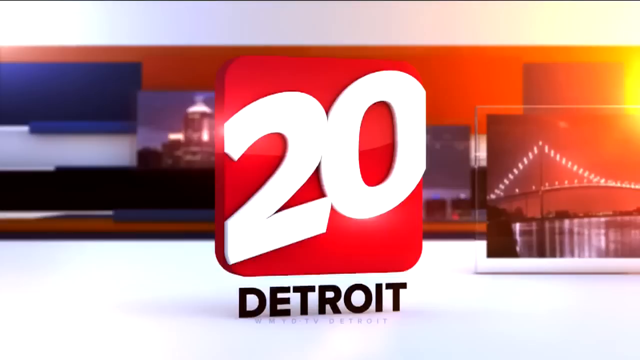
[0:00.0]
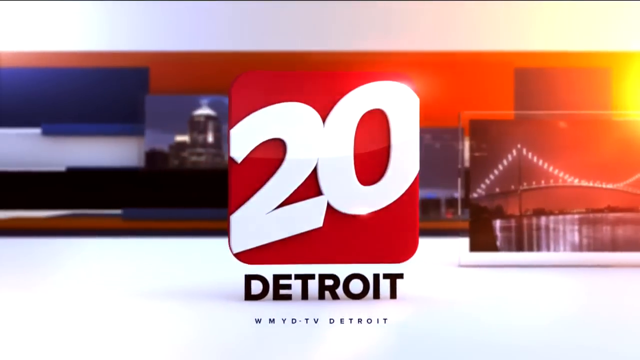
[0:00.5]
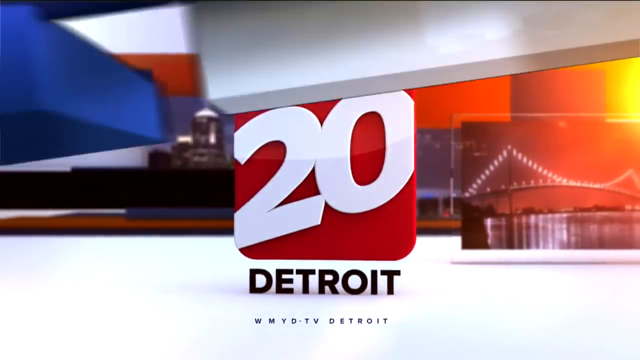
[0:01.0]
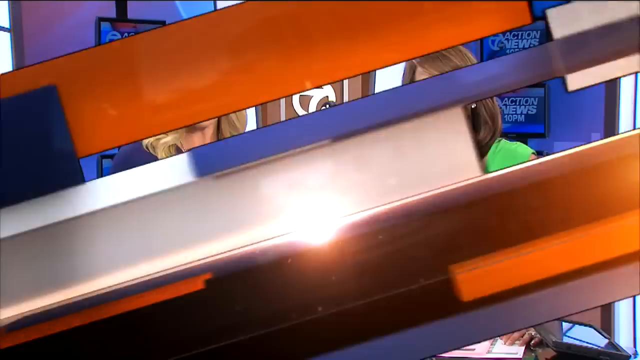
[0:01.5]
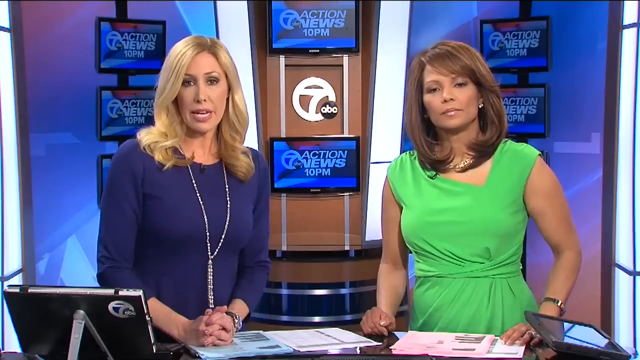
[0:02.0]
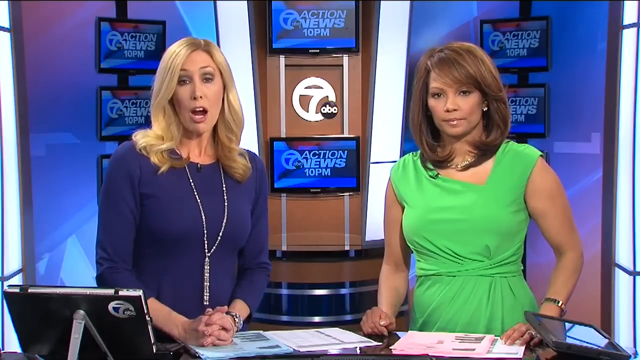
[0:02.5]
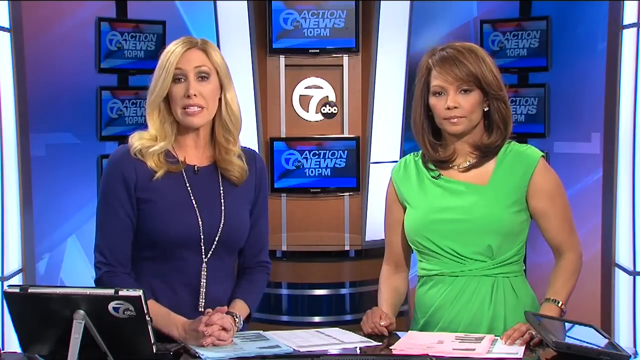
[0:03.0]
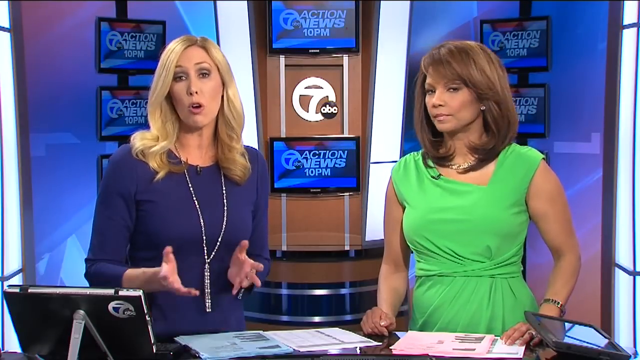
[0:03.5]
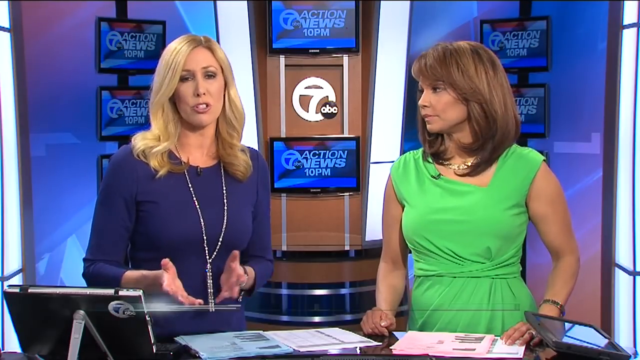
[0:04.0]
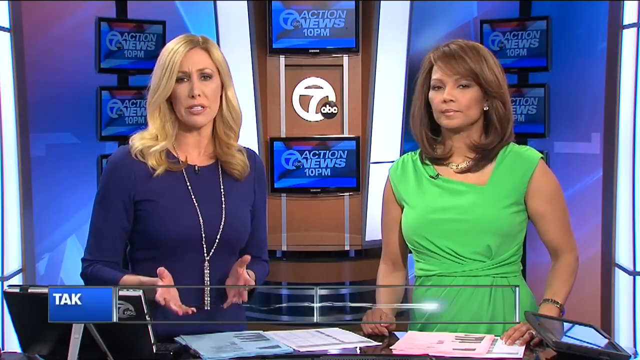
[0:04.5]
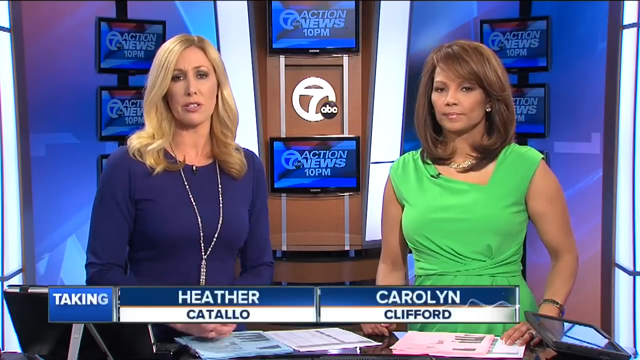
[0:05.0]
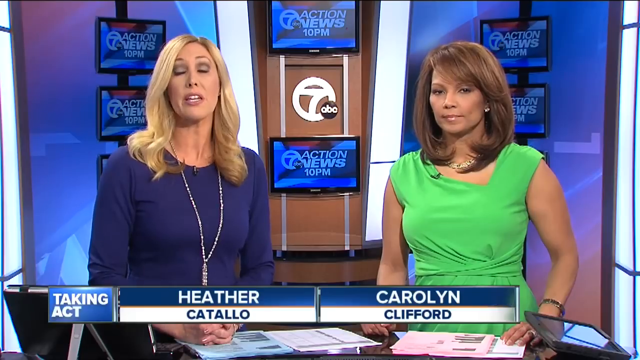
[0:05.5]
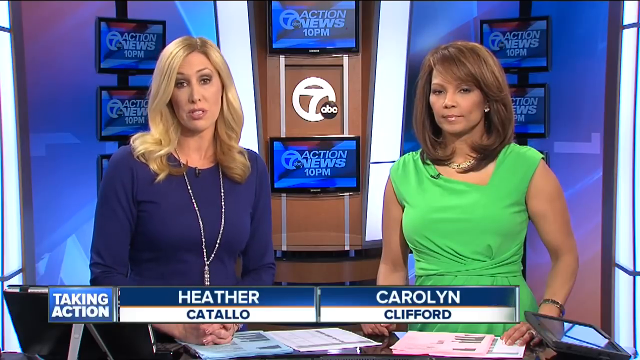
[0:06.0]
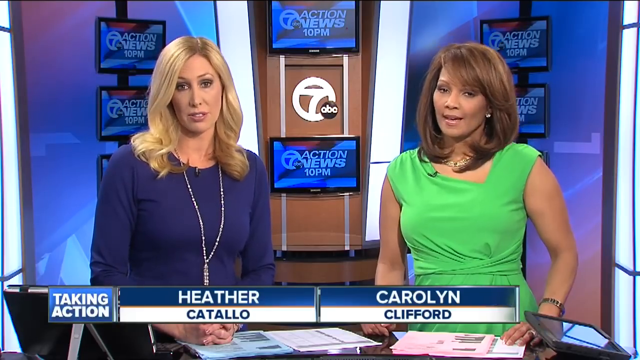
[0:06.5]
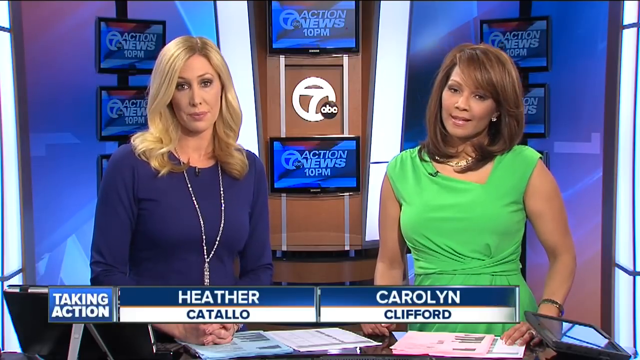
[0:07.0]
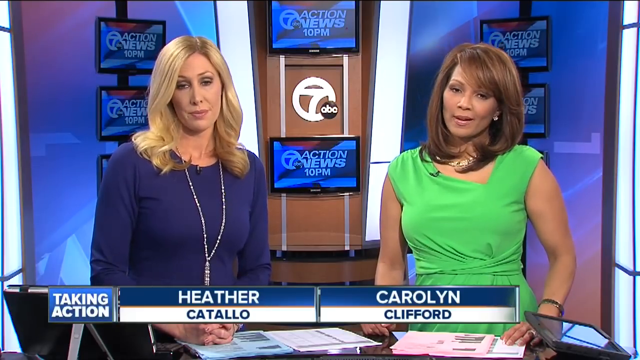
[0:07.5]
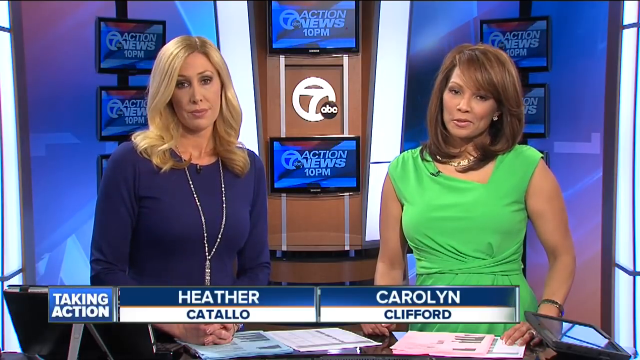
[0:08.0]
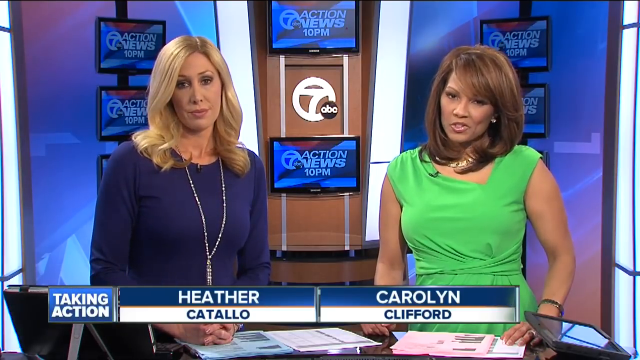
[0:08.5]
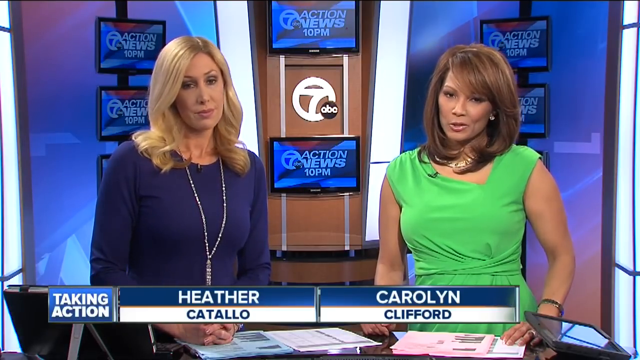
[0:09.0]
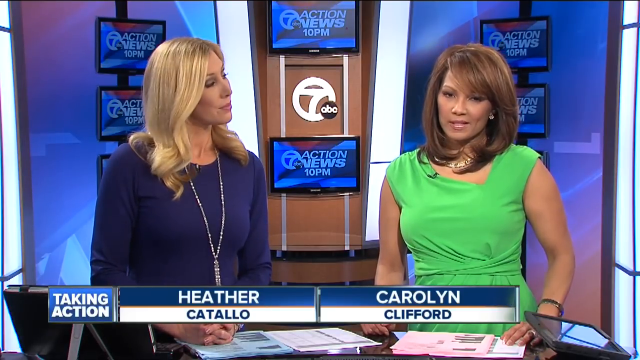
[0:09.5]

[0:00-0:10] A newscast from channel 20 in Detroit opens with different images of around Detroit, then cuts to two female news anchors who appear to be standing in front of a digital screen made up of a bunch of TVs. The logo for ABC 7 news appears. The first anchor looks to be probably in her 50s and is blonde and Caucasian; the second looks to be probably in her 40s and is African American. Both are dressed professionally. The Caucasian anchor is Heather Catalo and the African American anchor is Caroline Clifford, and they take turns talking.